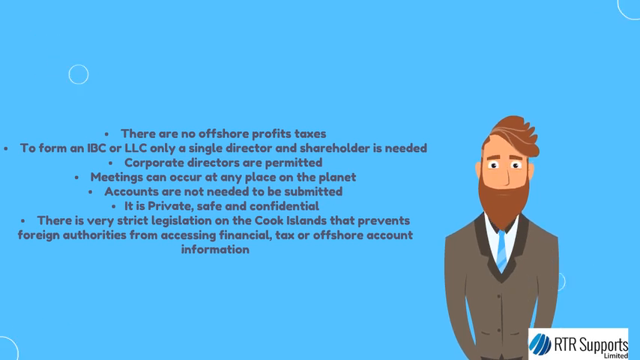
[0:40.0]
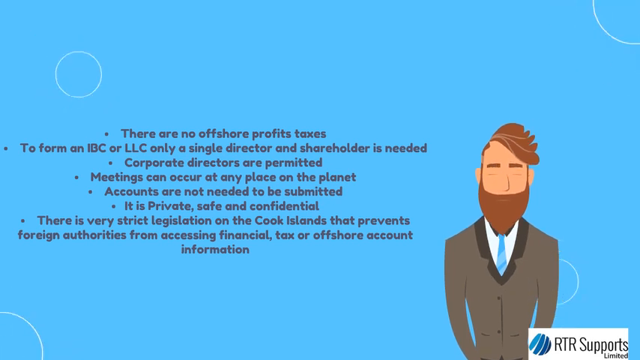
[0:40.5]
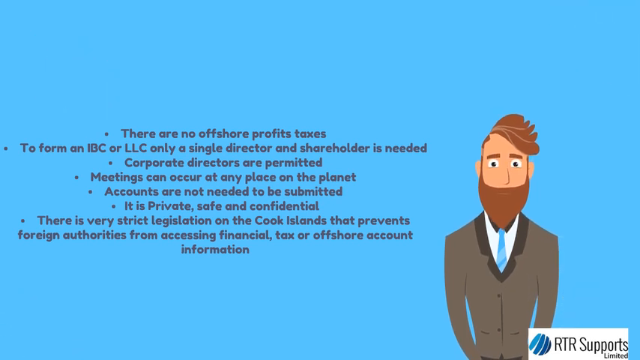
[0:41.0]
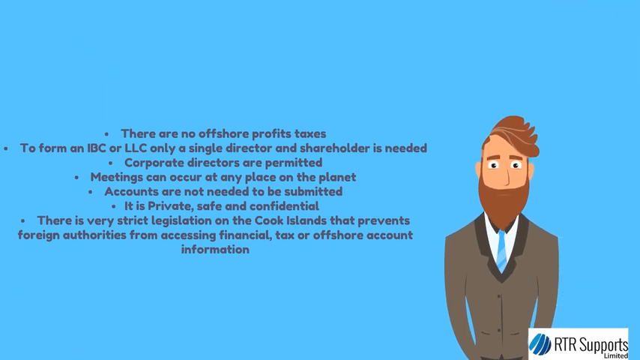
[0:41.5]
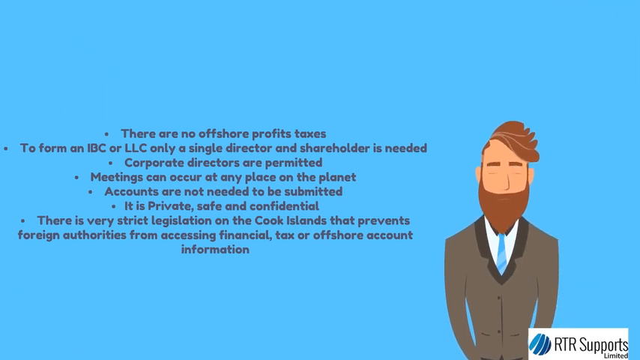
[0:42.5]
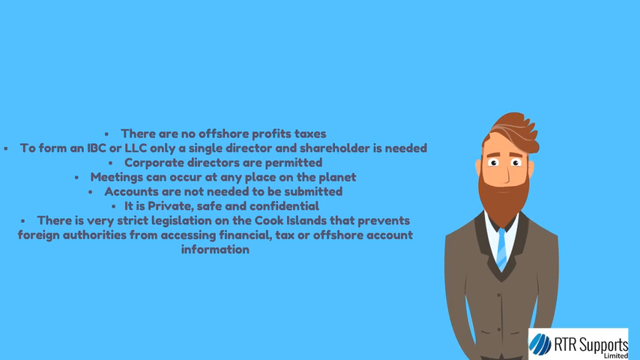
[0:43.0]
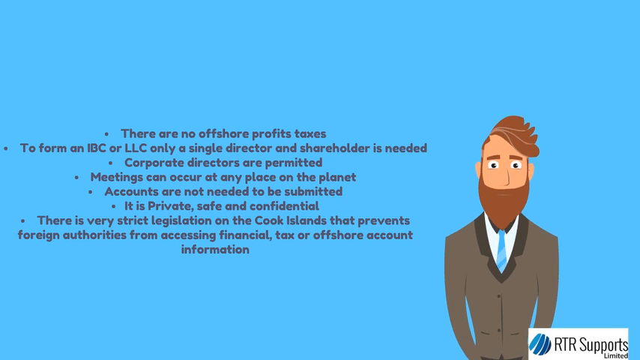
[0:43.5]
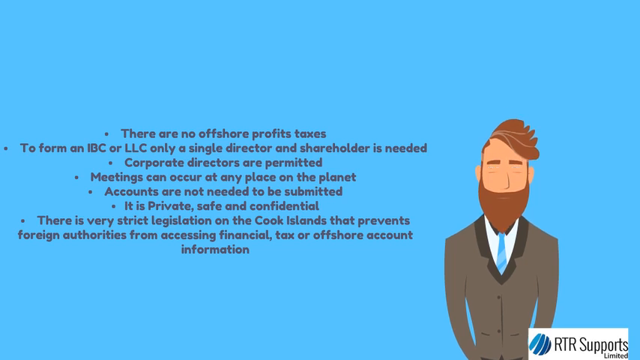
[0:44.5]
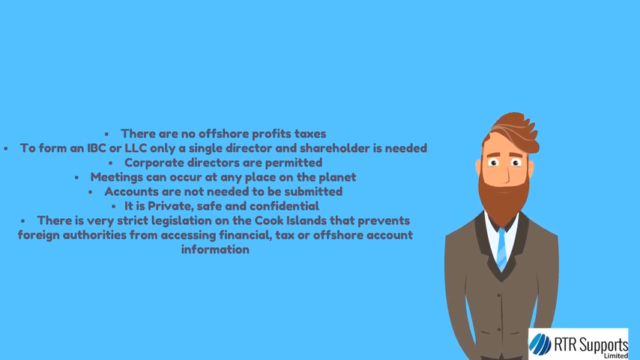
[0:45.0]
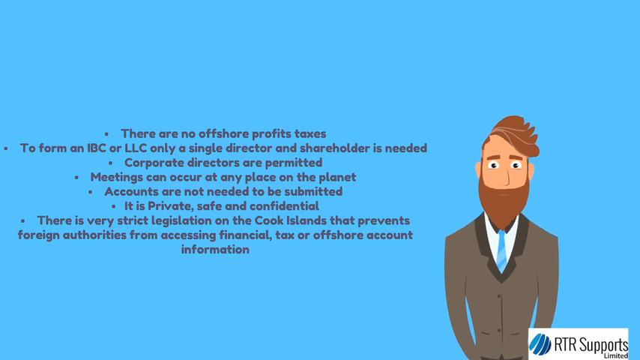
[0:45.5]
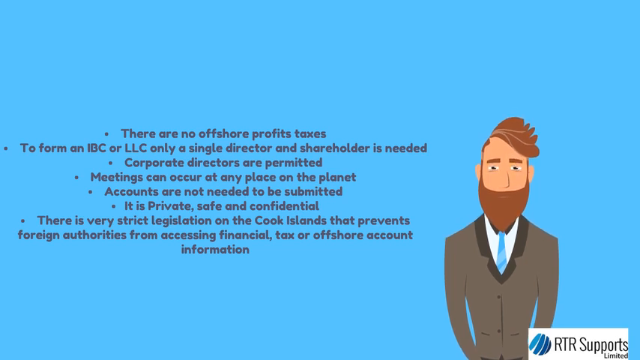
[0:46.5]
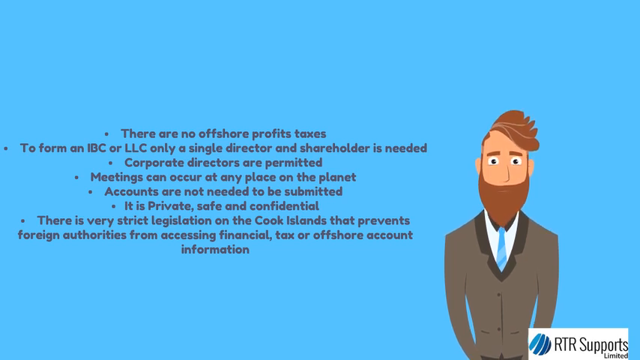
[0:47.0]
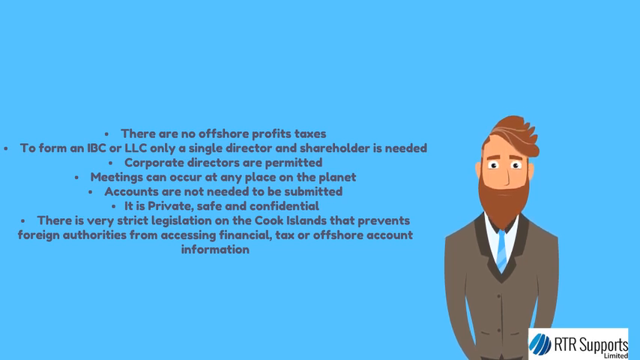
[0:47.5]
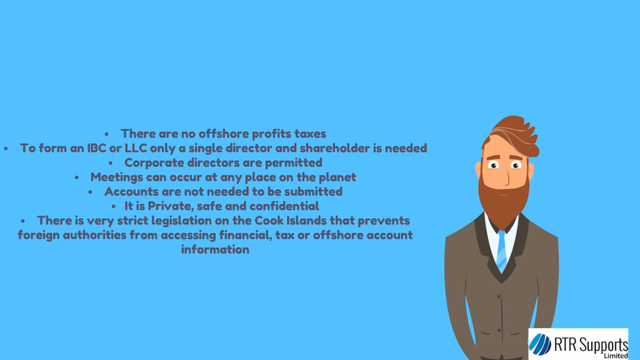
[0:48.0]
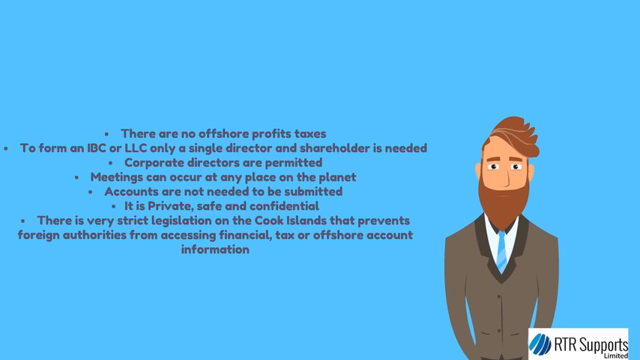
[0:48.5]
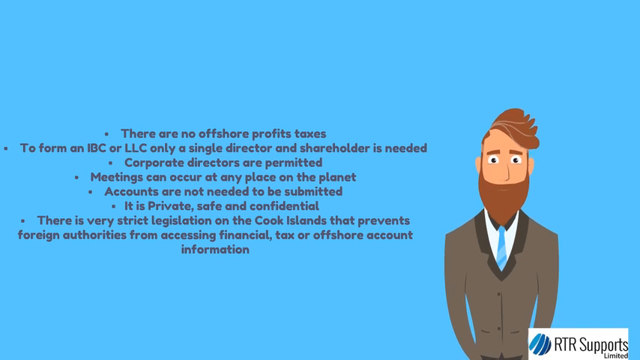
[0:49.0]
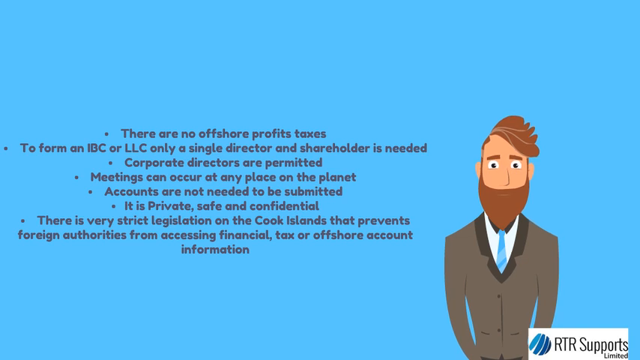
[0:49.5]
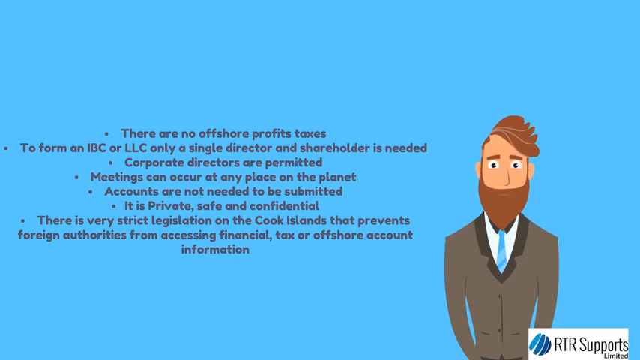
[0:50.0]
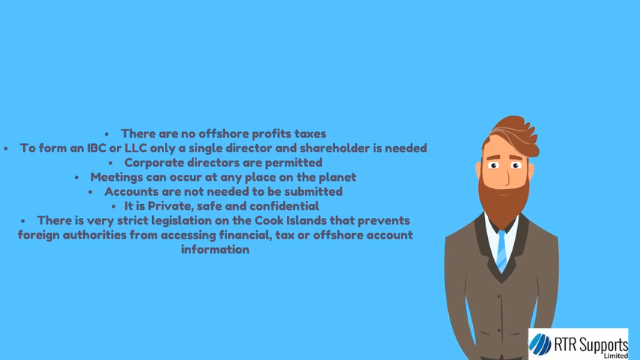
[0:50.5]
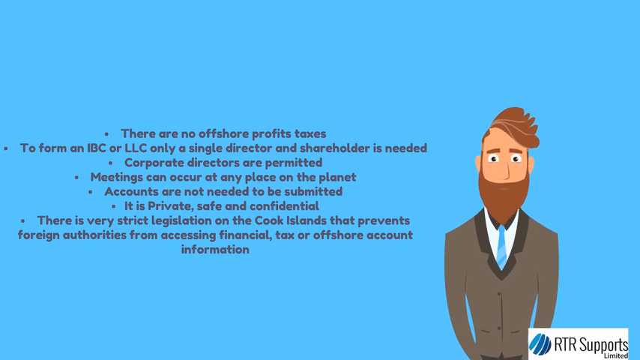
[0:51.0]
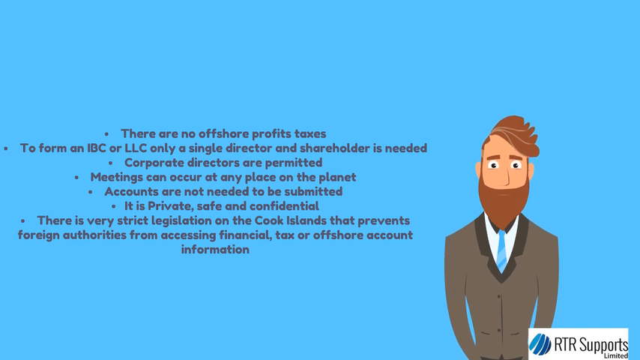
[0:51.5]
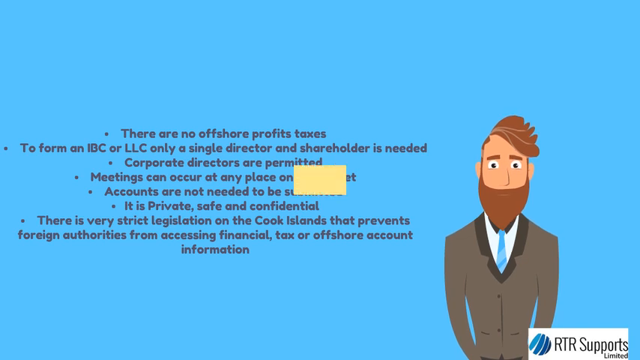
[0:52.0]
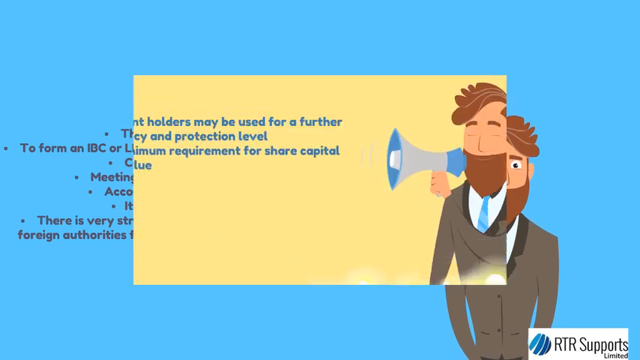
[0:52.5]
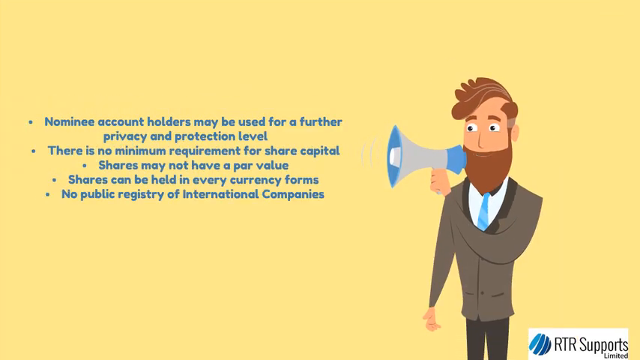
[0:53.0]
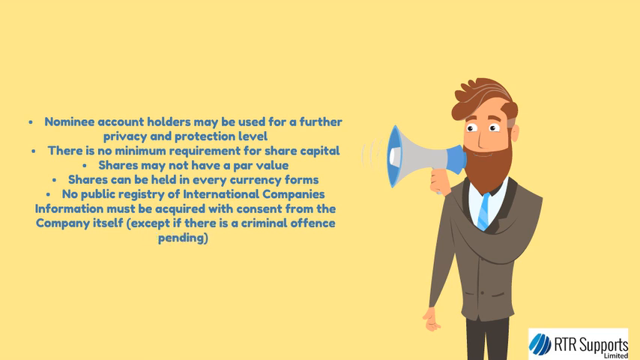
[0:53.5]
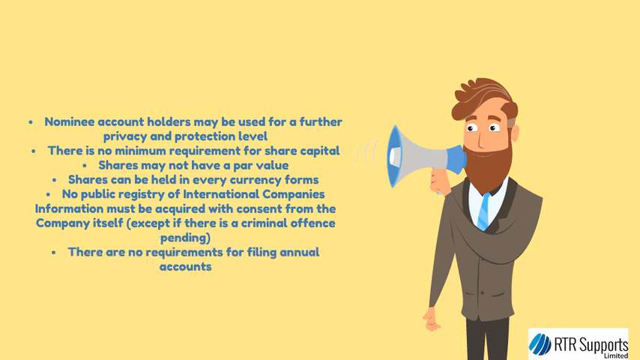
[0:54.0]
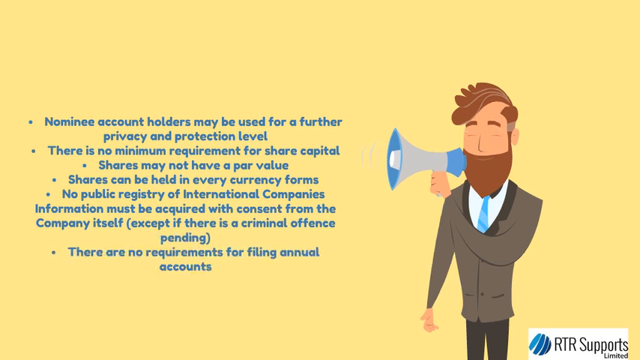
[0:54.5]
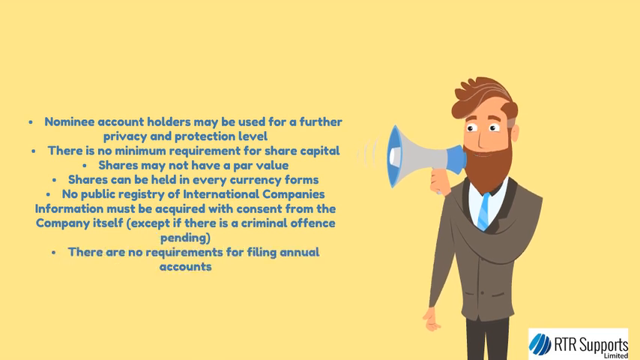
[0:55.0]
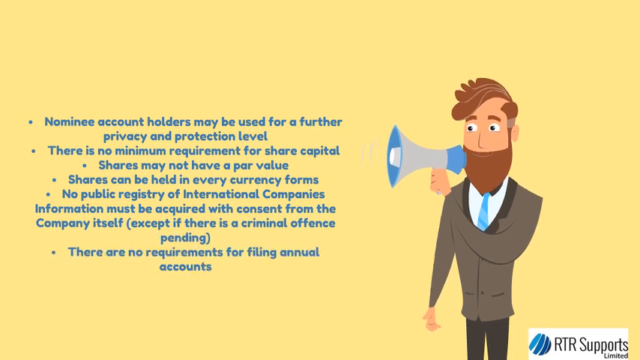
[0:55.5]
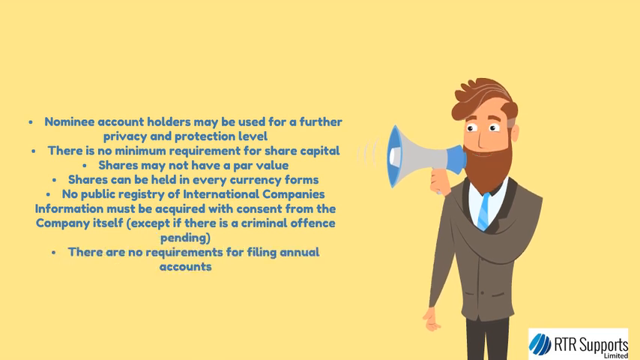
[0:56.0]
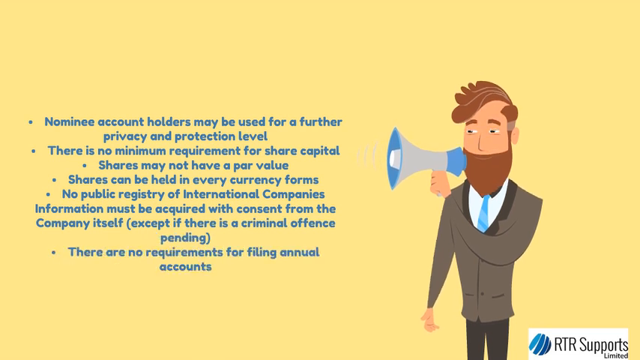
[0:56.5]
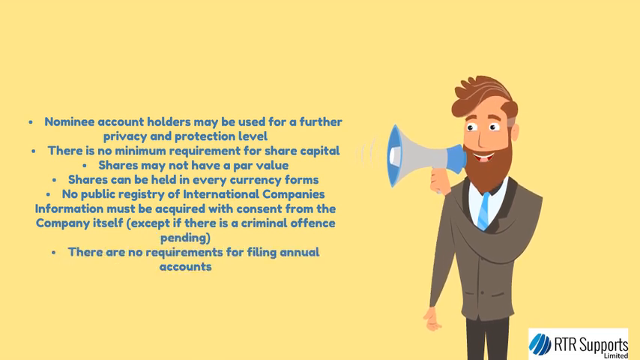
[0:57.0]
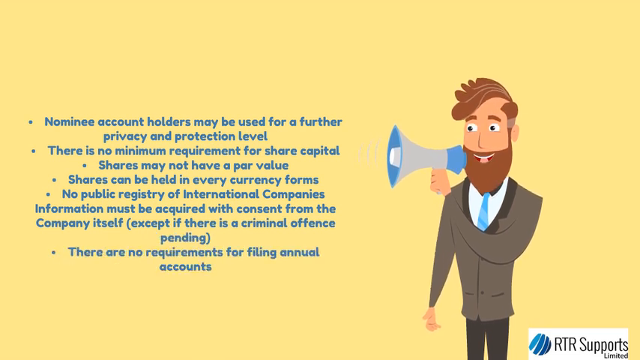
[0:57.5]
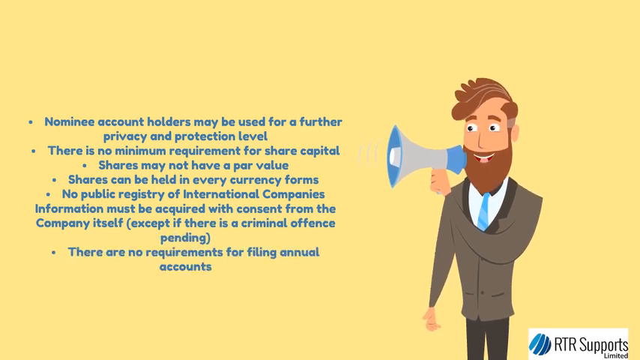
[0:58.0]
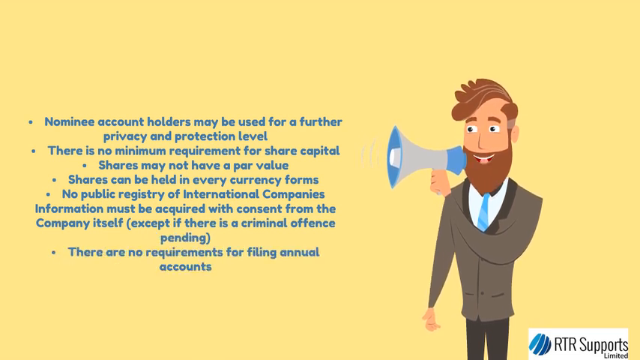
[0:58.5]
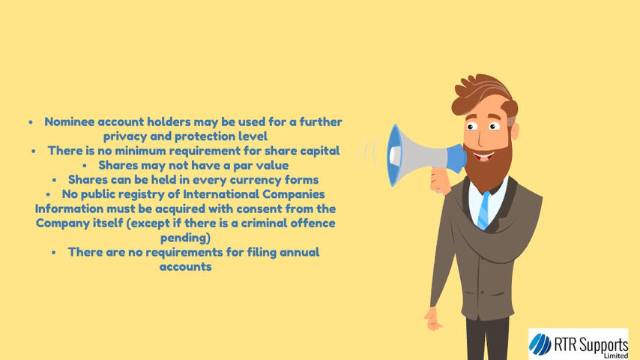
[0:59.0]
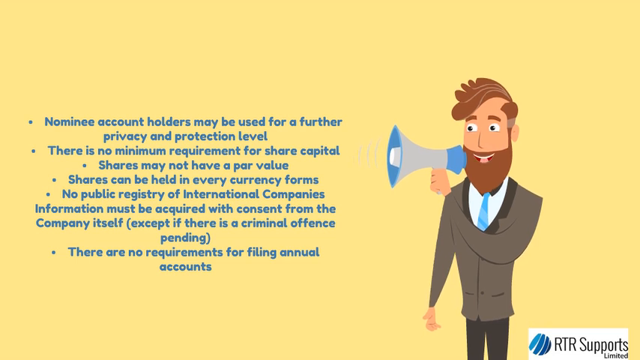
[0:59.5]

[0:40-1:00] The advantages of the Cook Islands account continue, apparently read out loud by Chris: nominee account holders may be used for a further level of privacy and protection, there is no minimum requirement for share capital, shares may not have a par value, there is no public registry of international companies, information must be acquired with consent from the company itself except if a criminal offense is pending, and there is a point about annual accounts. Chris Ben holds a microphone as he emphasizes these points.